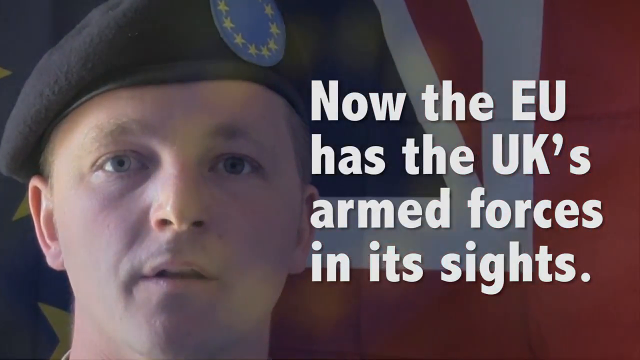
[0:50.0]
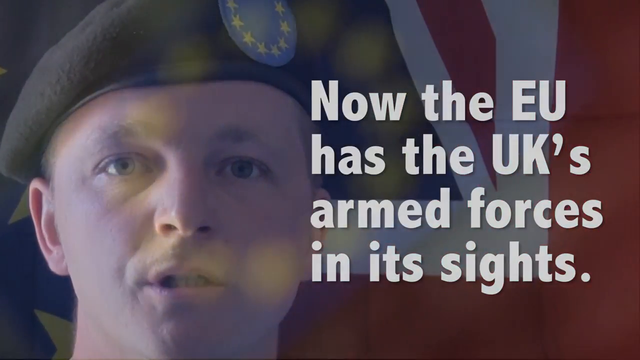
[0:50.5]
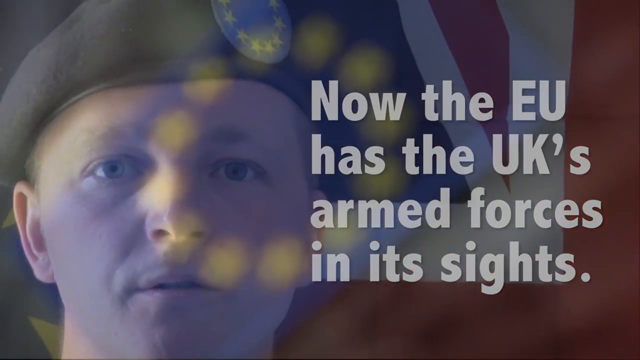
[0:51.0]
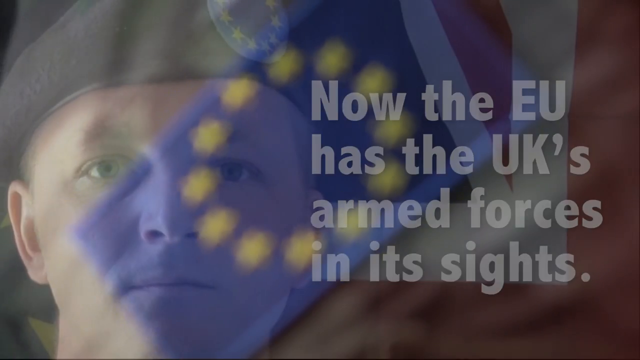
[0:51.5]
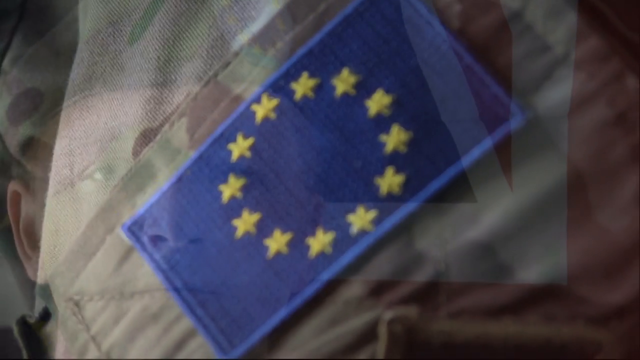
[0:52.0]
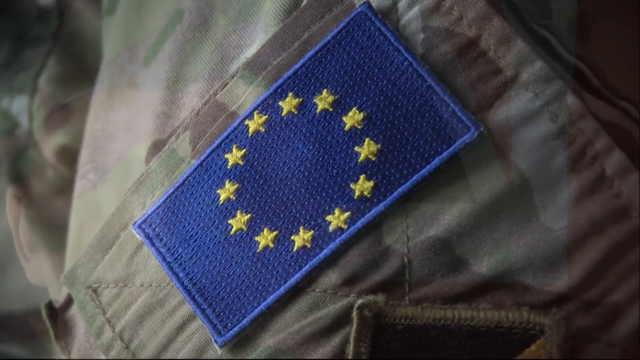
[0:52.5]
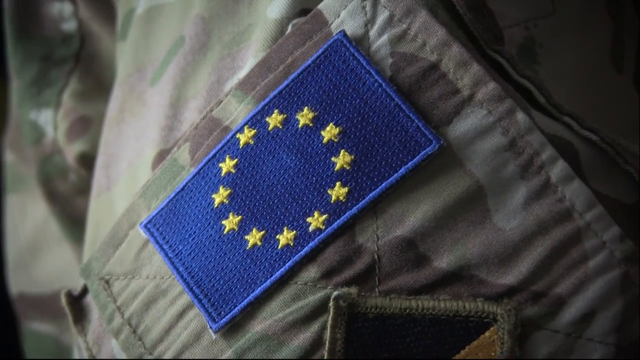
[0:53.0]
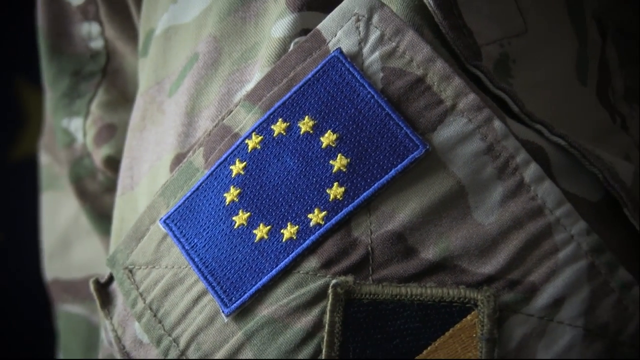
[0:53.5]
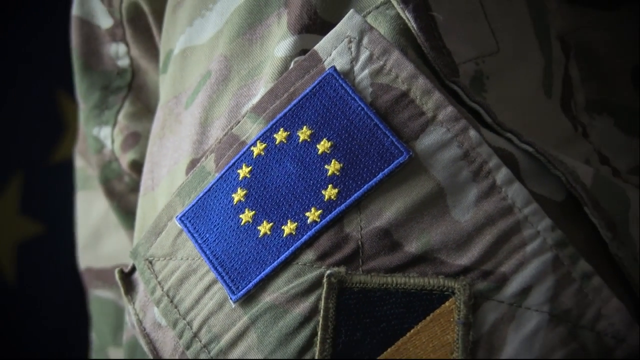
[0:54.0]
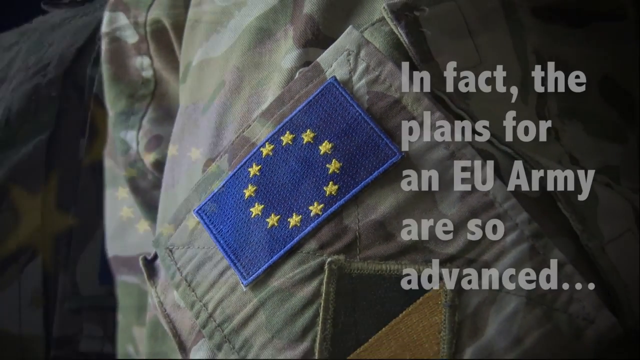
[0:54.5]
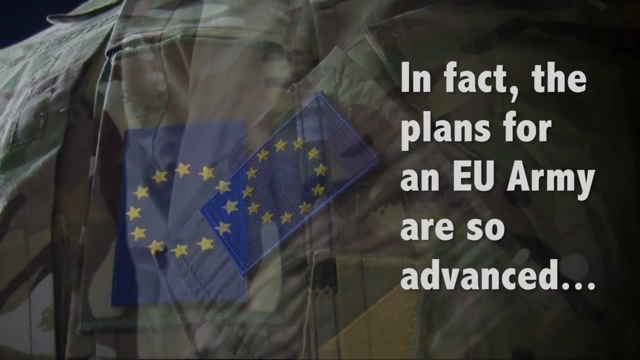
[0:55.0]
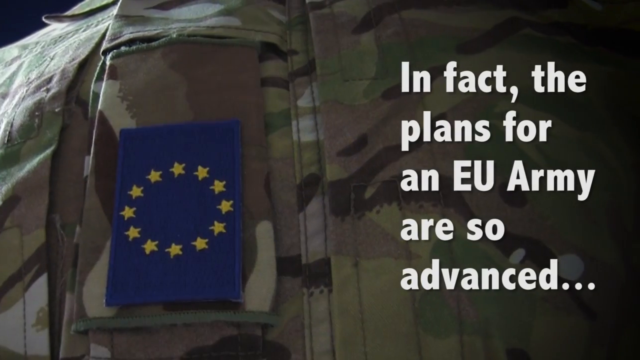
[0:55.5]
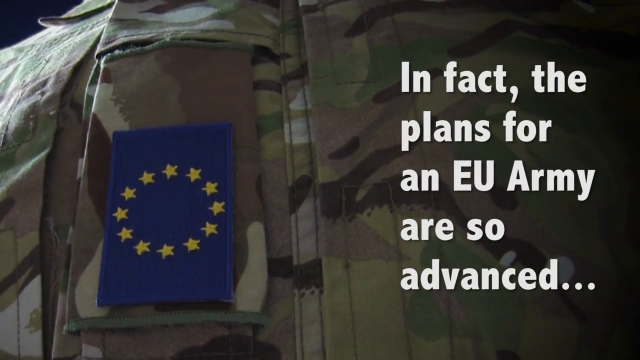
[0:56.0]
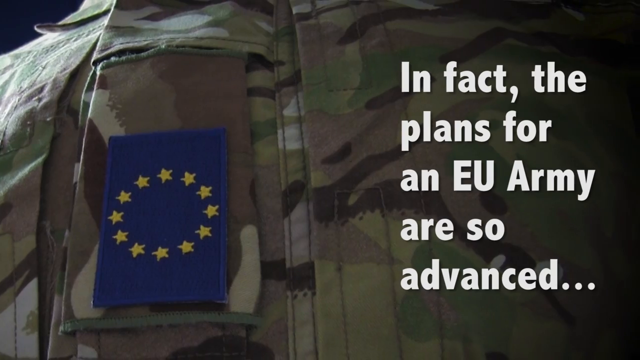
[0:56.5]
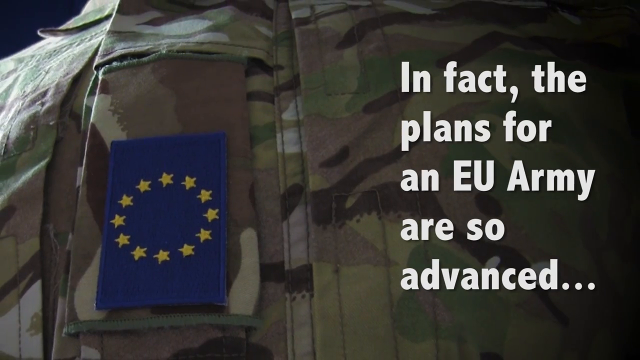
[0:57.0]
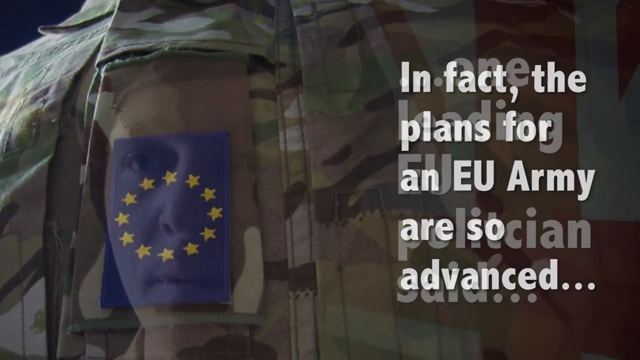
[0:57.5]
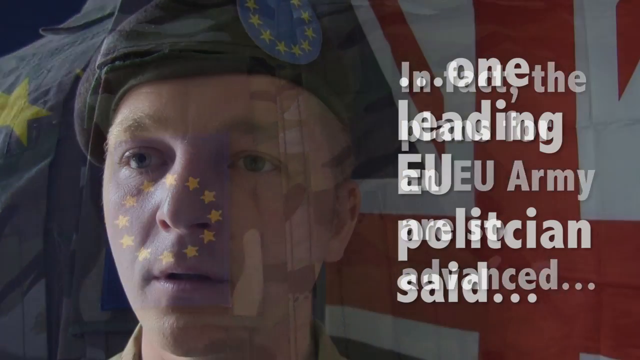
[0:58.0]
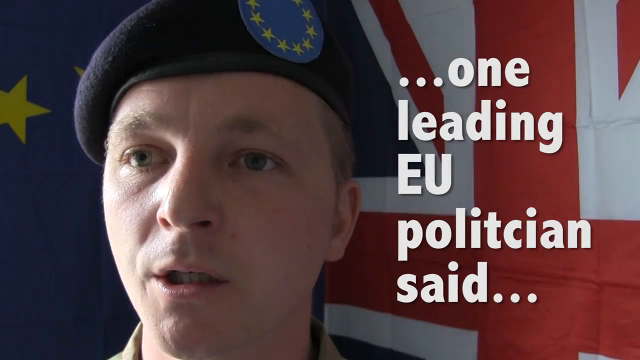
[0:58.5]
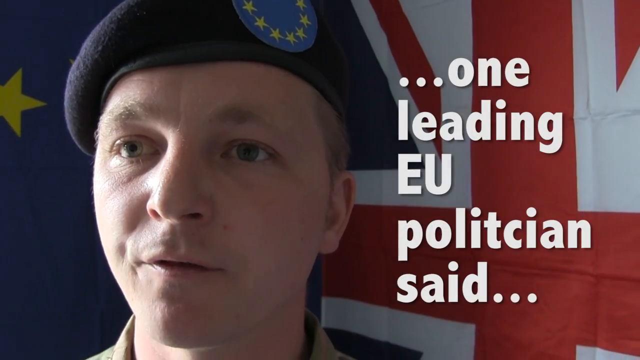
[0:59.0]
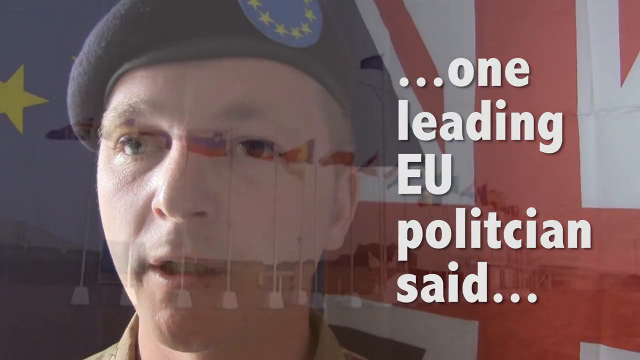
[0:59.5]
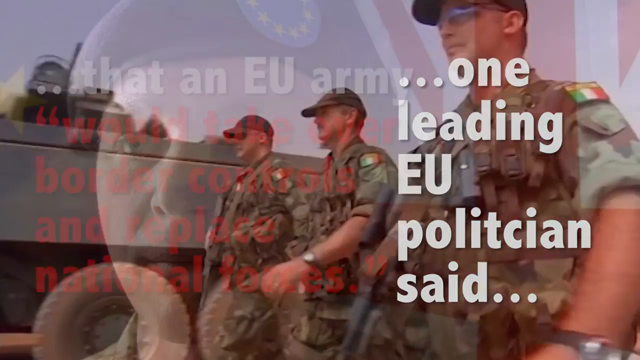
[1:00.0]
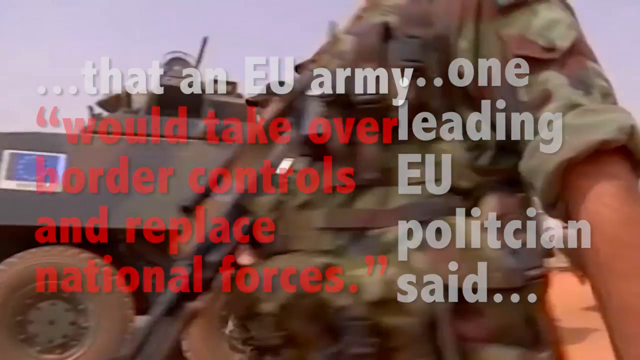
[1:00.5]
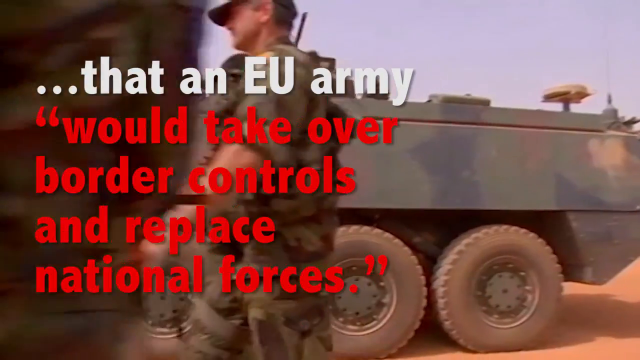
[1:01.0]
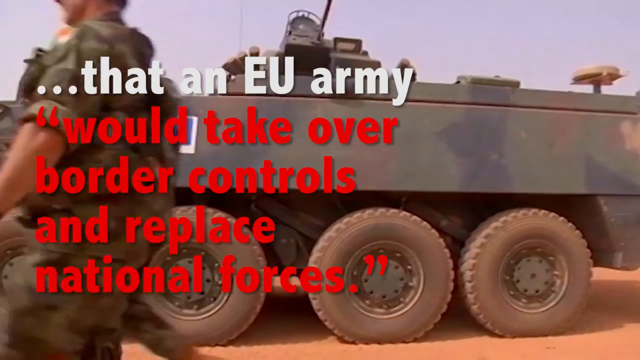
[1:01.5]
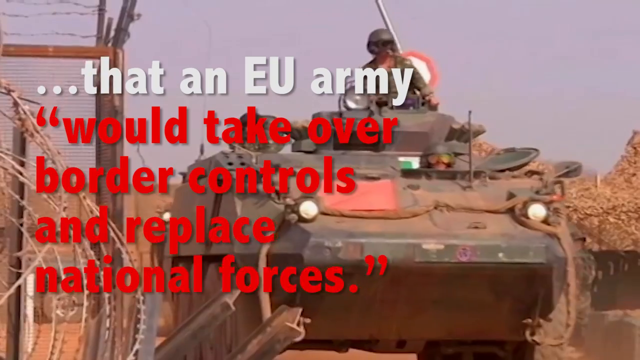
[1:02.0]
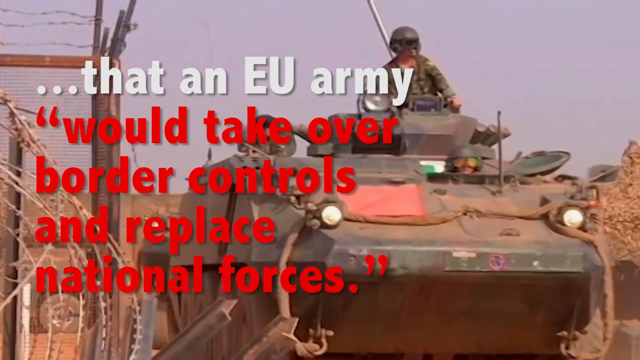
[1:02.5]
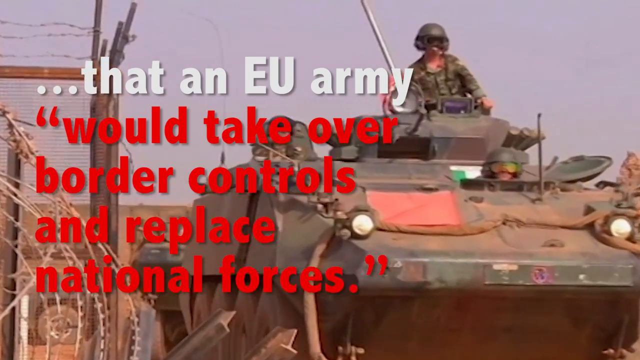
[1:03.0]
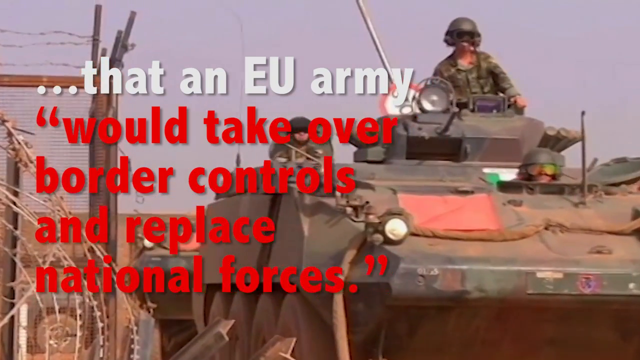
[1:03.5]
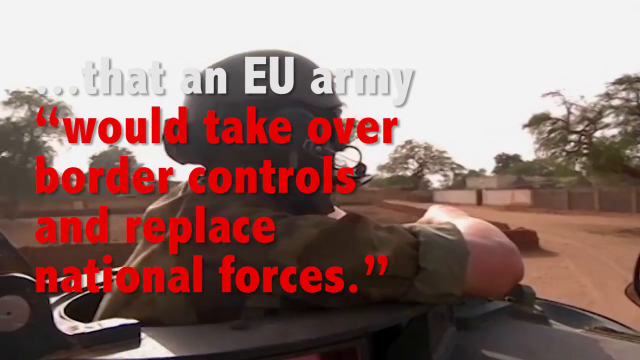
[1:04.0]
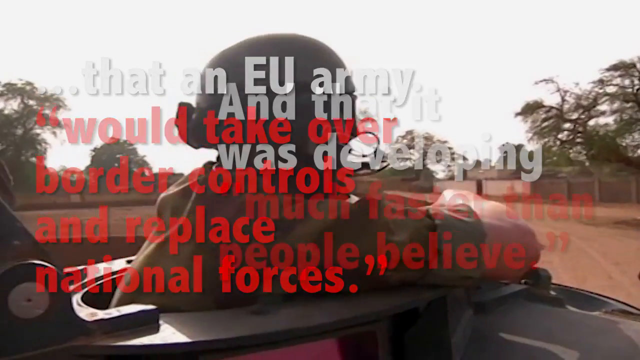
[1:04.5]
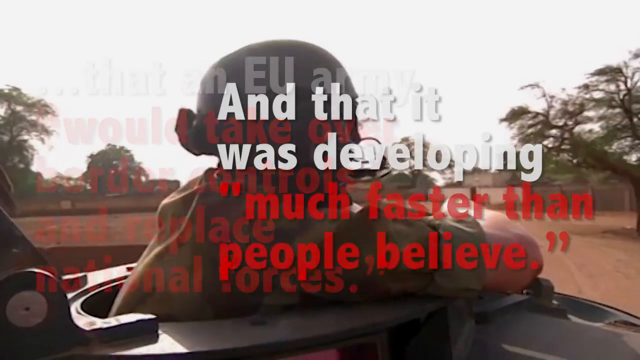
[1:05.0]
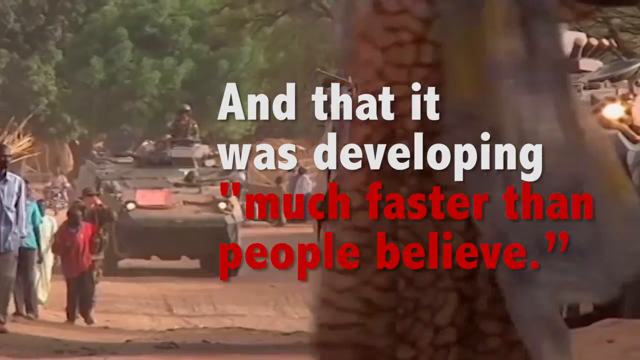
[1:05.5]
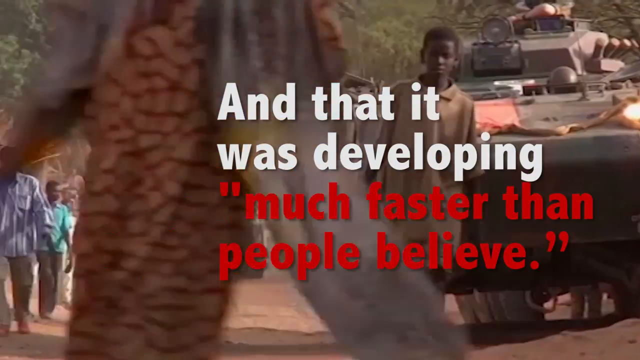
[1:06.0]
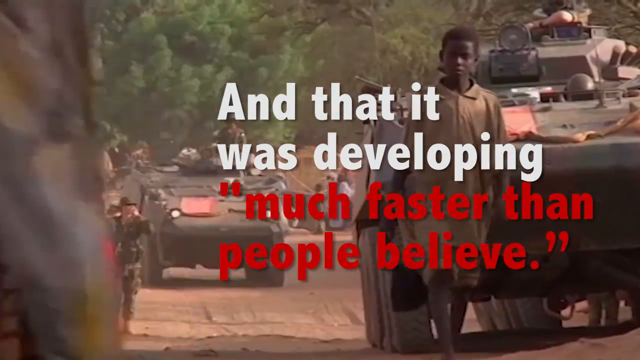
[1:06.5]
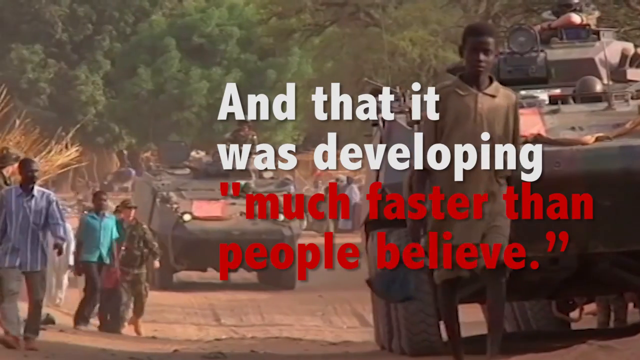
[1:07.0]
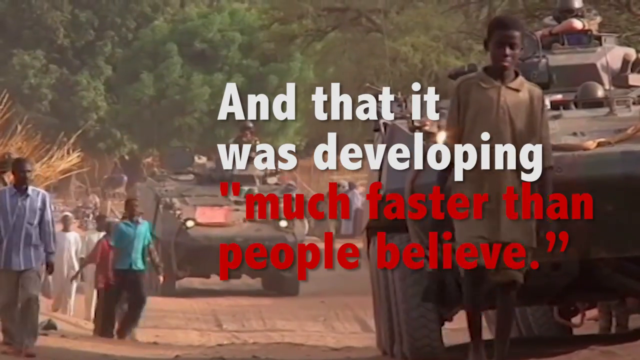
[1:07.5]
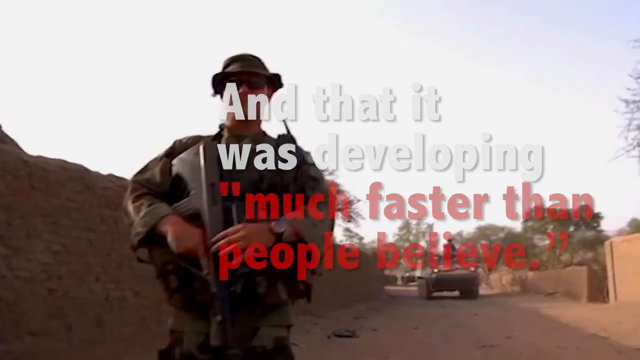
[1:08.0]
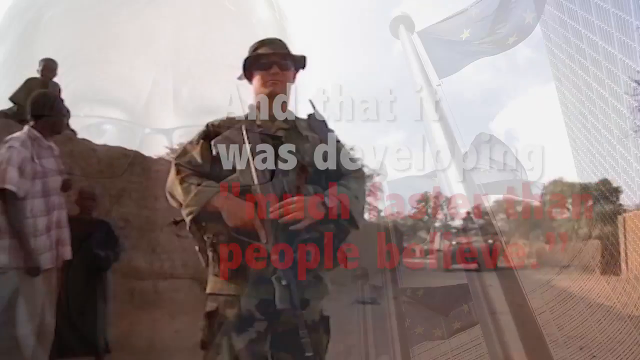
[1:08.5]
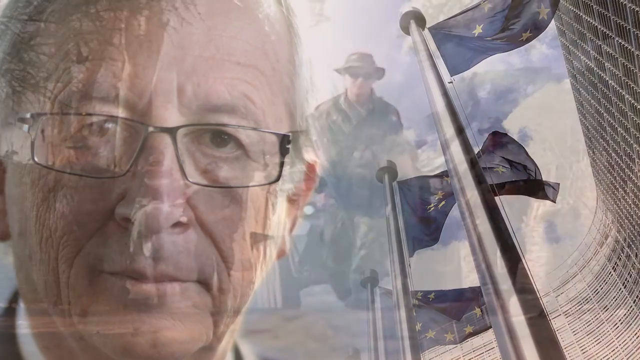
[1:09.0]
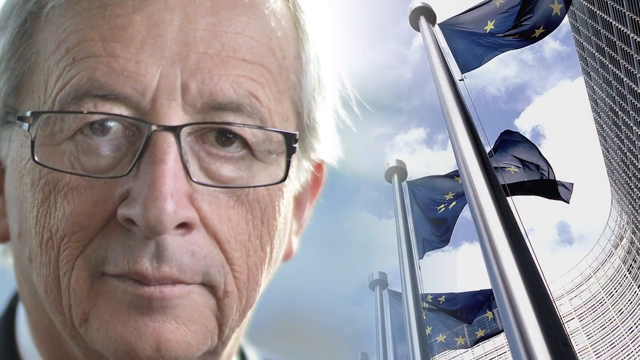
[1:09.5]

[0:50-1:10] The words "now the EU has the UK's armed forces in its sights" are across the screen while a man wearing a hat talks to the screen. Then there is a close-up of a blue patch with a circle of yellow stars on a camouflage uniform. On the right-hand side of the screen are the words "in fact, the plans for an EU army are so advanced. One leading EU politician said that an EU army would take over border controls and replace national forces." In the background is a tank with three large wheels and a man standing on top of it, along with barbed wire, a fence and a few other soldiers wearing helmets. More words appear: "and that it was developing much faster than people believe." Green grass and trees are in the background, along with a picture of an old man's face; his skin is quite wrinkled and he wears glasses.